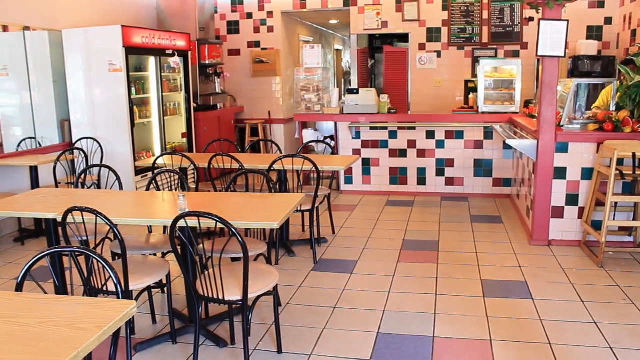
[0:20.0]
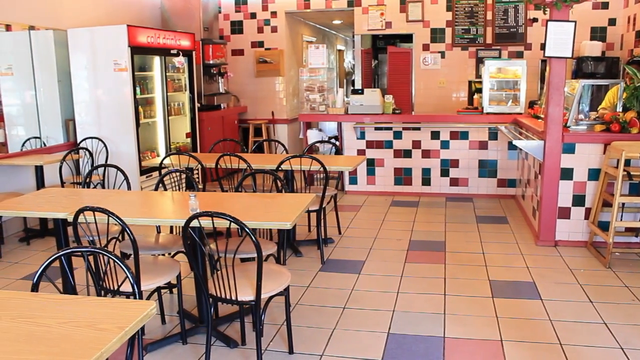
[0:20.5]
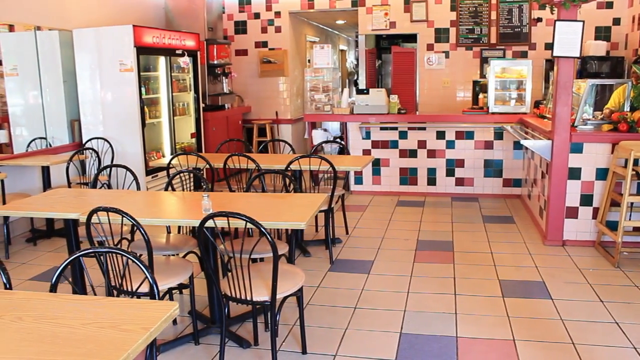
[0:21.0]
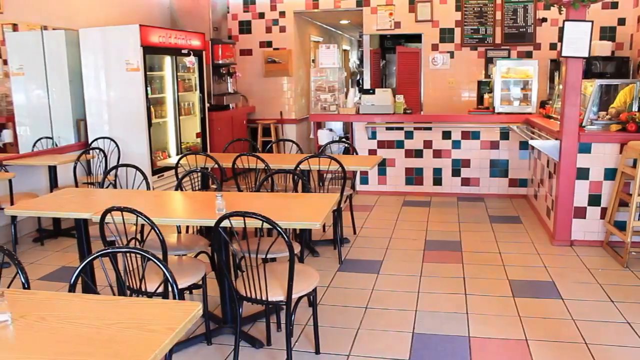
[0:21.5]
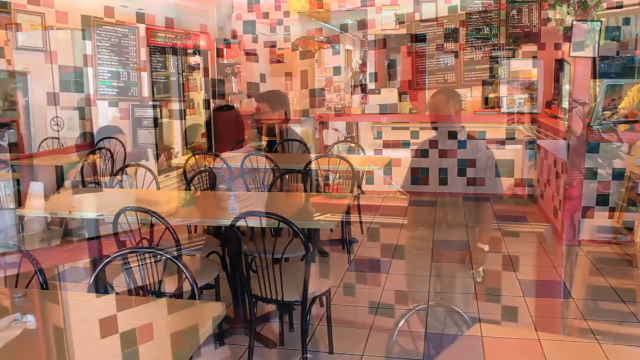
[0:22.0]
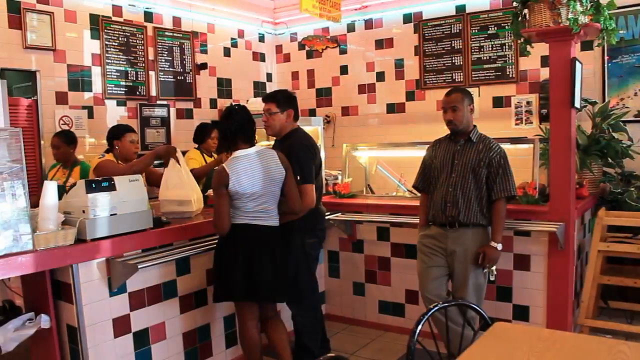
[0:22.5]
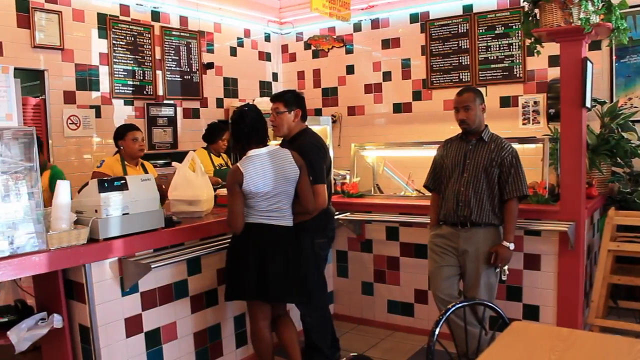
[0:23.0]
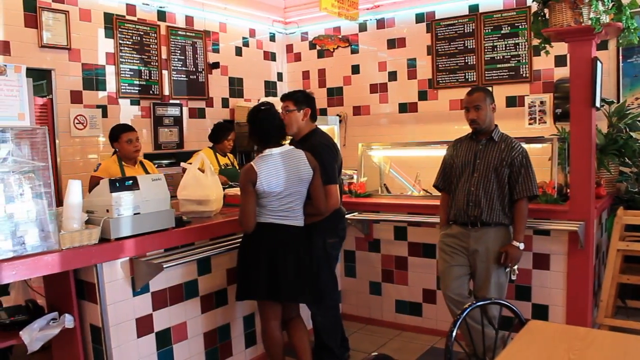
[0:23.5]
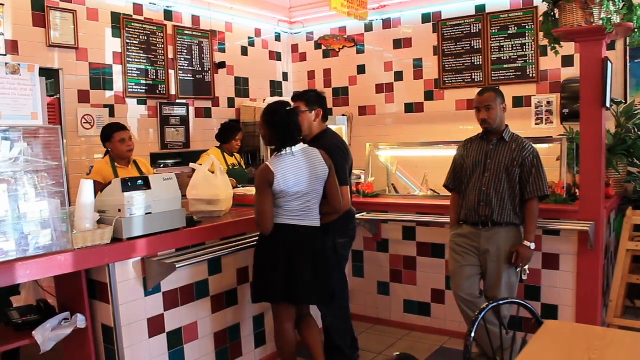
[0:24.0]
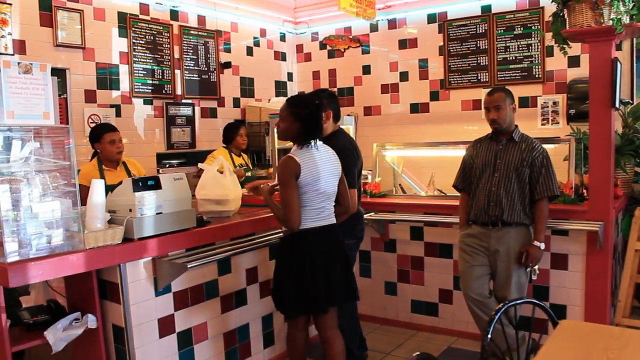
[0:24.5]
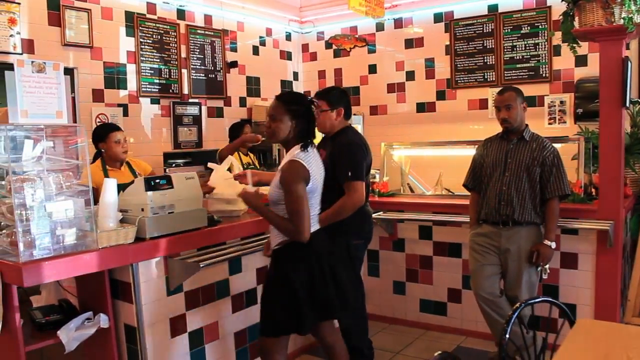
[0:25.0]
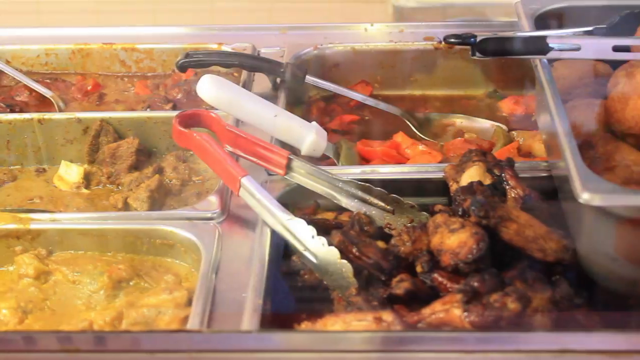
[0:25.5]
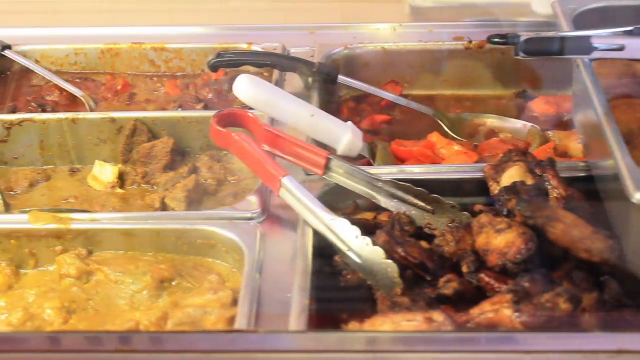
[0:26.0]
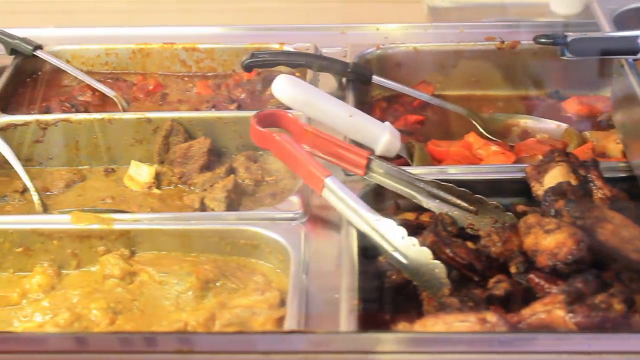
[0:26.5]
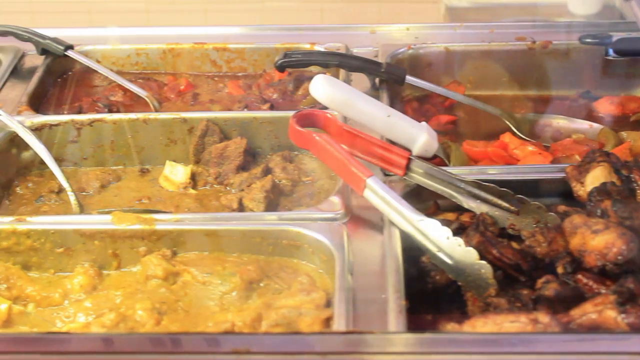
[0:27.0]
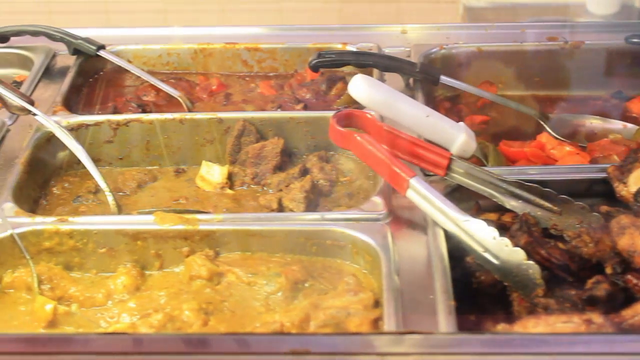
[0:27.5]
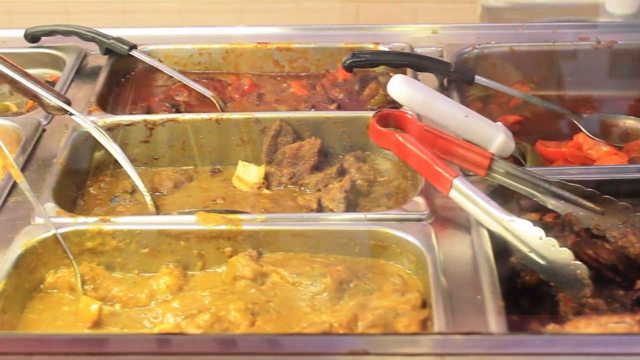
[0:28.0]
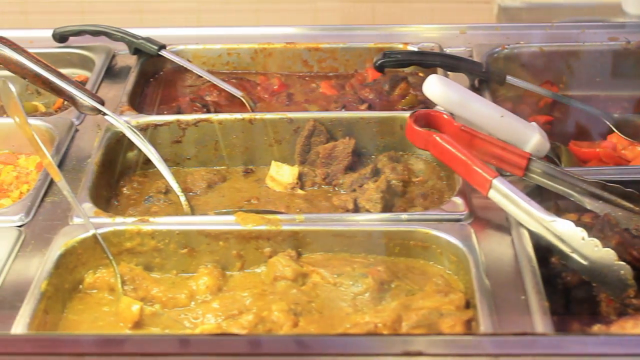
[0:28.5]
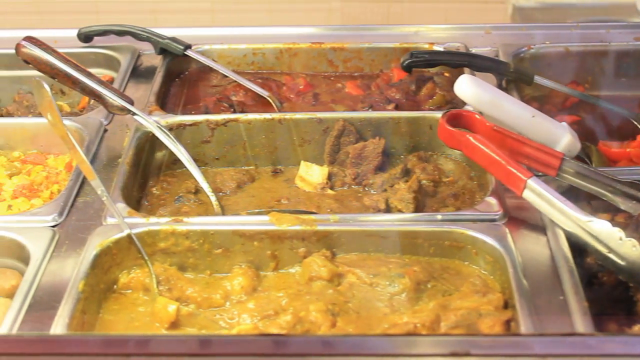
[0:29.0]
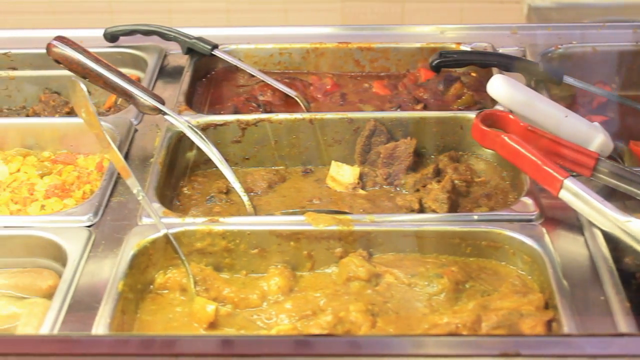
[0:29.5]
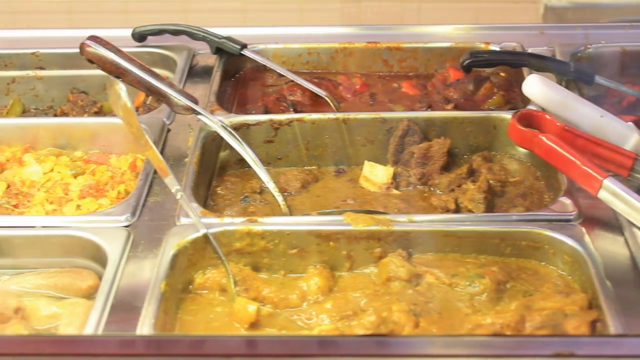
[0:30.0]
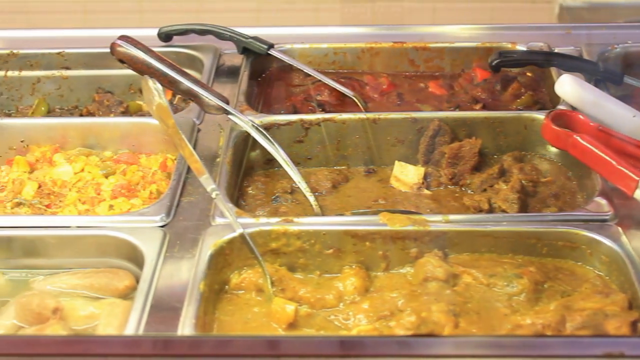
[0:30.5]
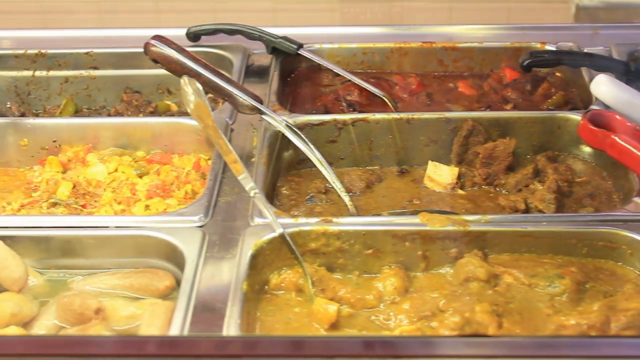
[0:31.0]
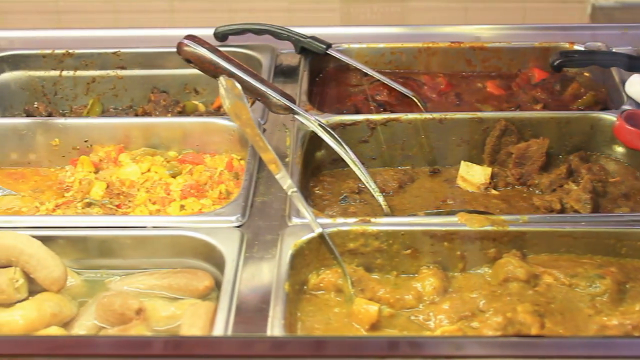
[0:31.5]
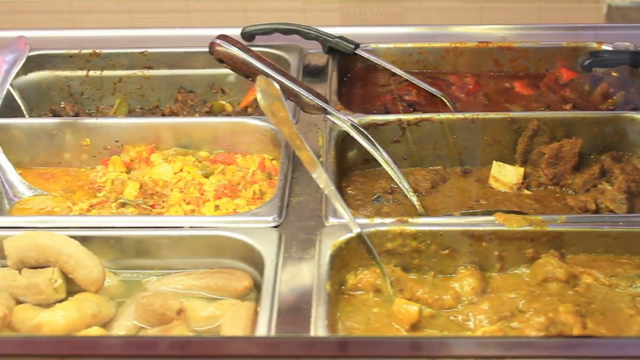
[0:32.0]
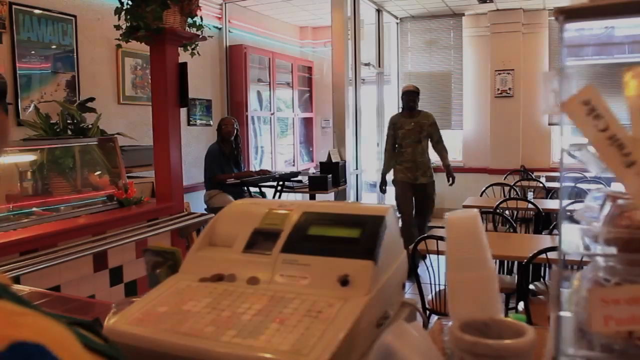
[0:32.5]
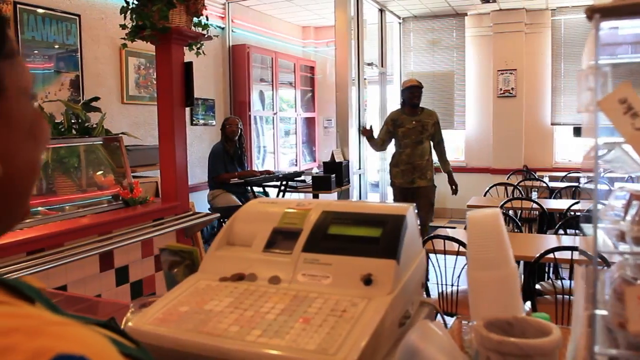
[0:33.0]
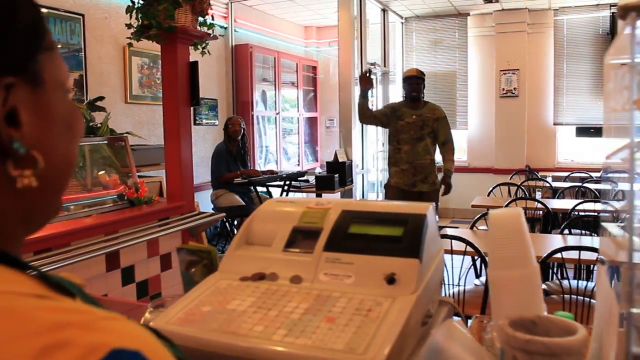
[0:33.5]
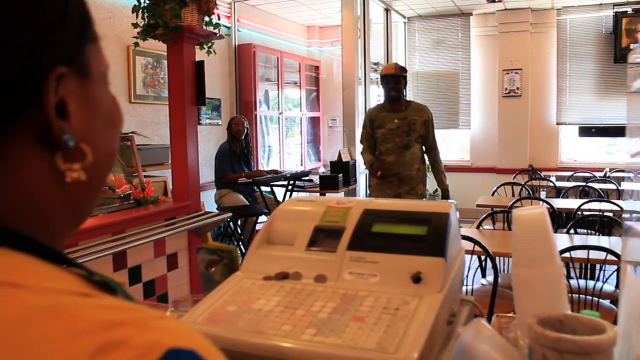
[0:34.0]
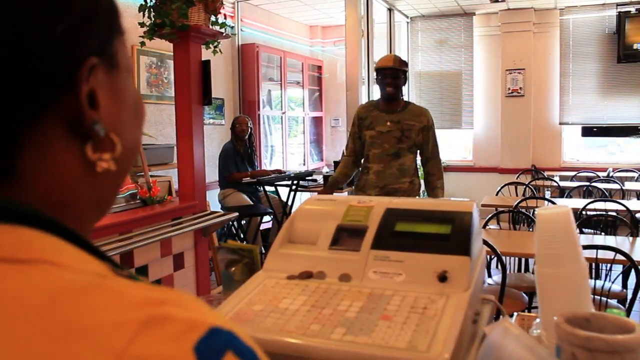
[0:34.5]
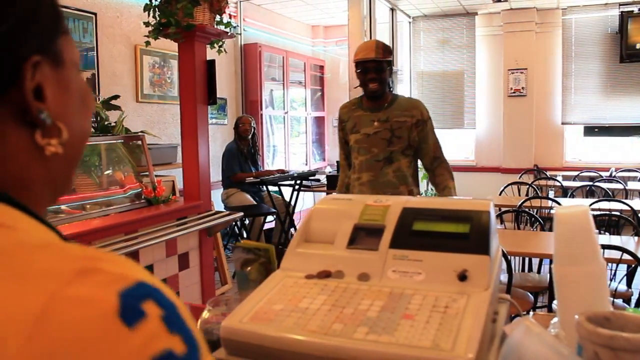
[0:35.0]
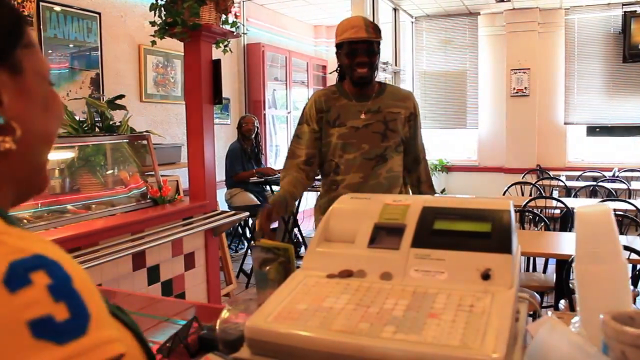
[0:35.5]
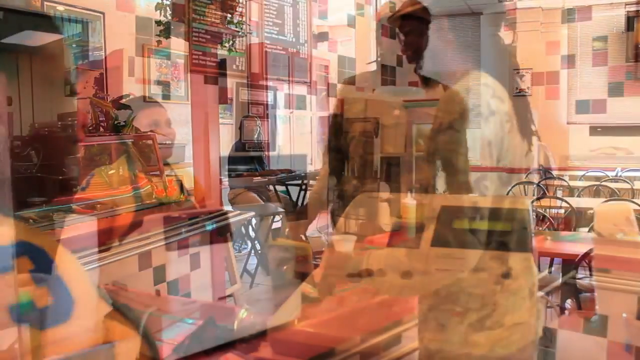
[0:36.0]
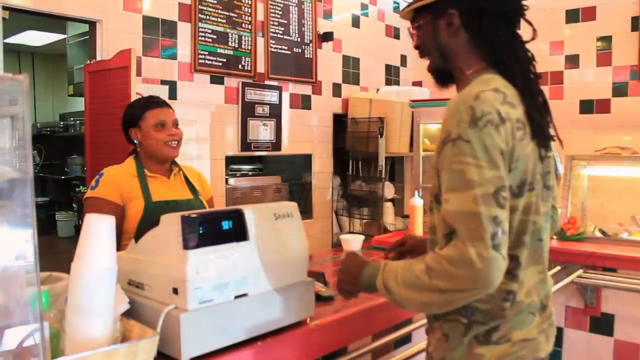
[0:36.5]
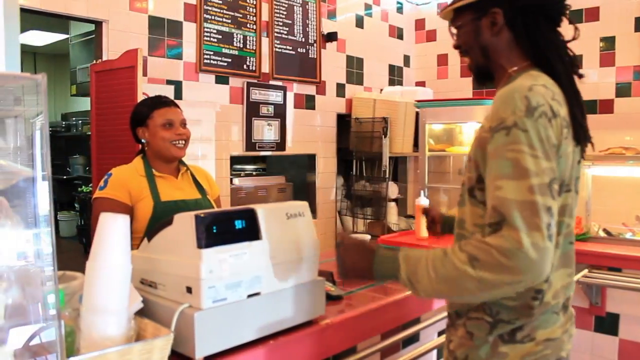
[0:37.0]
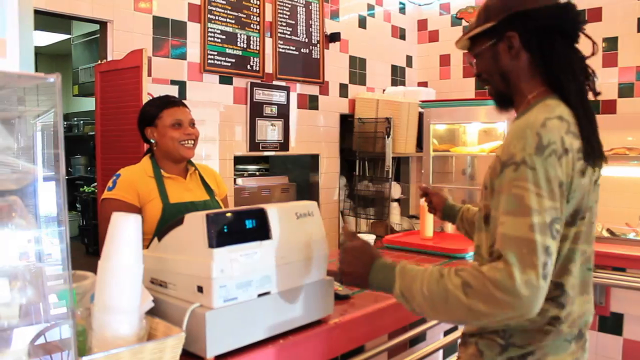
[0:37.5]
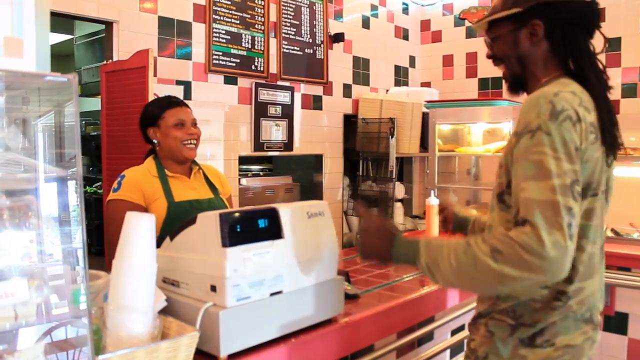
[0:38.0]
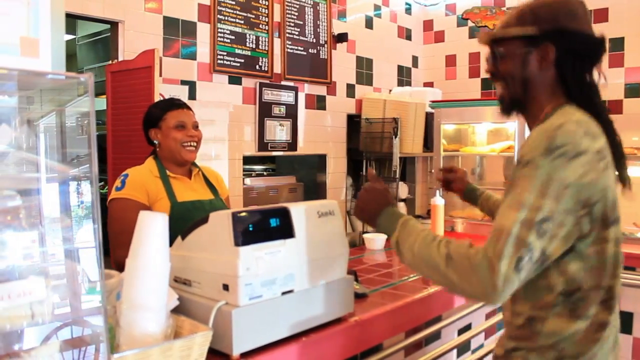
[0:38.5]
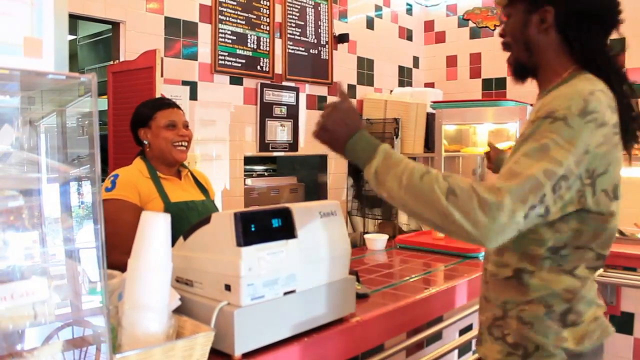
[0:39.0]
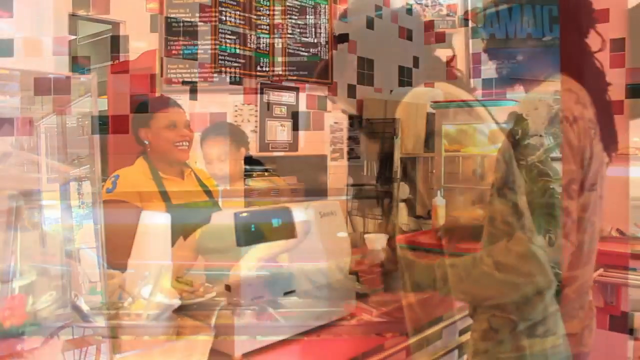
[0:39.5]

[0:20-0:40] The restaurant looks very clean, organized and put together. There are about four chairs, with about three more by the wall. An array of food is displayed: curry chicken and other kinds of chicken, some vegetables, and what looks like beef stew. A man walks into the restaurant, orders, and does a little dance while the woman serving him smiles.